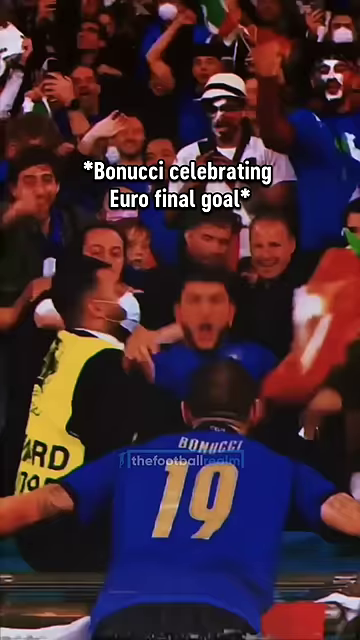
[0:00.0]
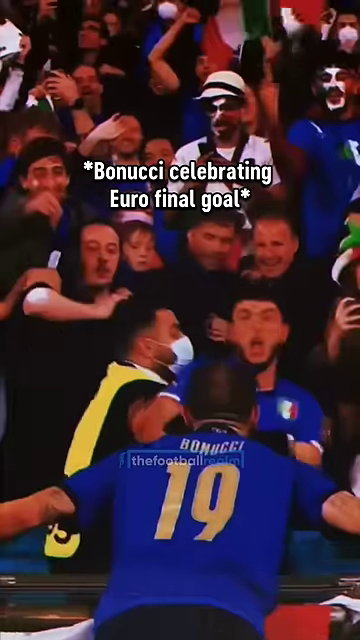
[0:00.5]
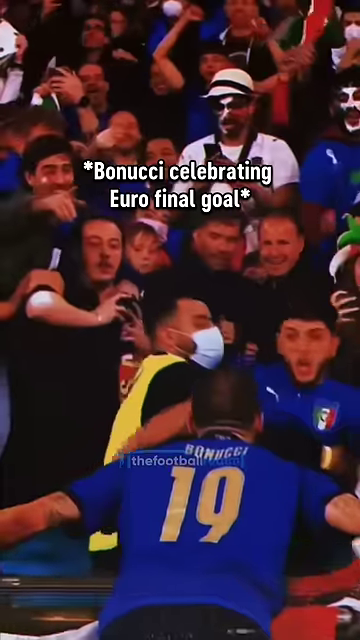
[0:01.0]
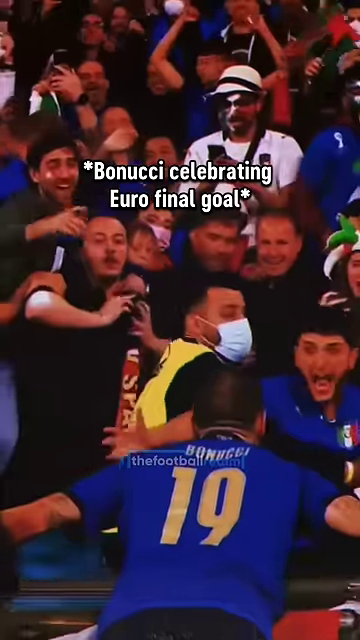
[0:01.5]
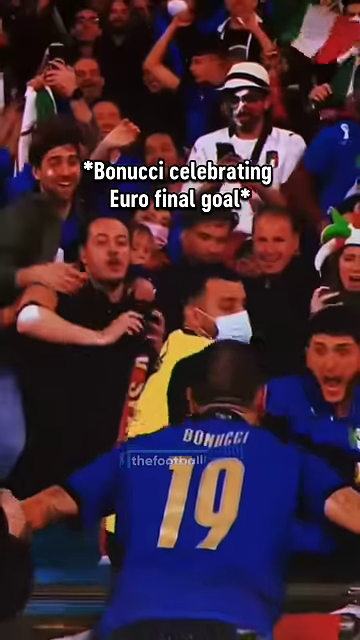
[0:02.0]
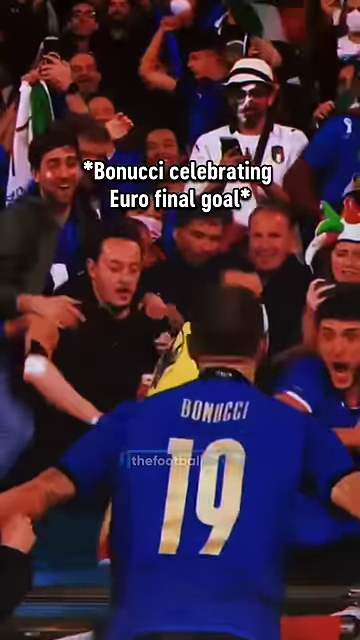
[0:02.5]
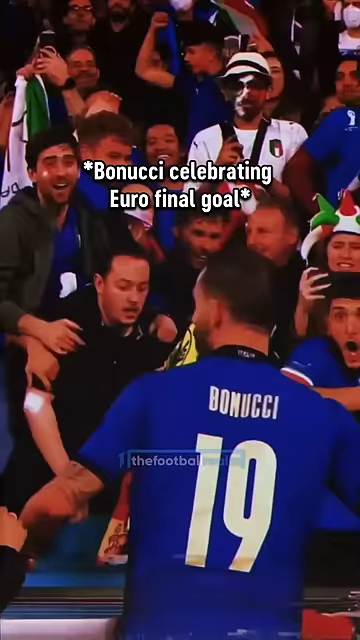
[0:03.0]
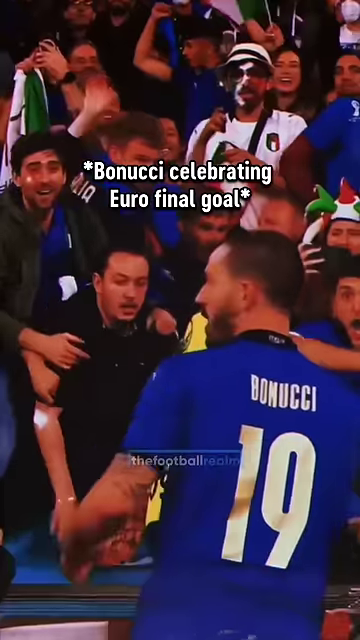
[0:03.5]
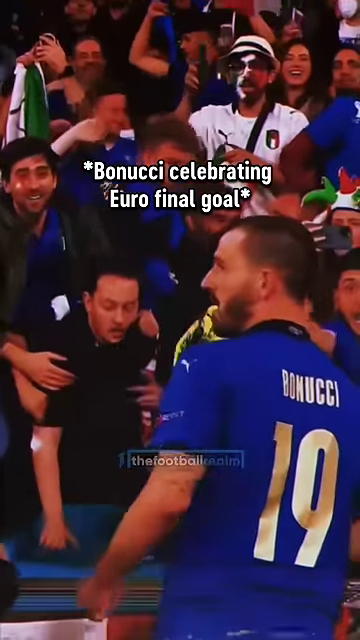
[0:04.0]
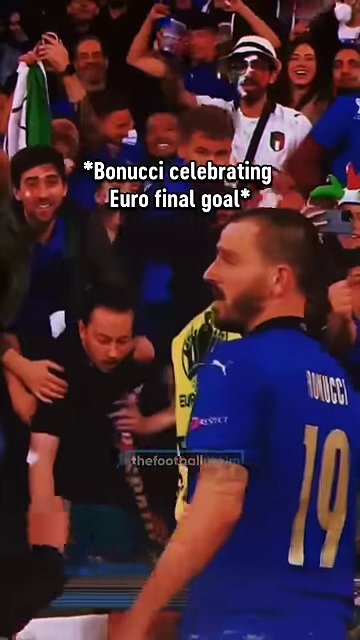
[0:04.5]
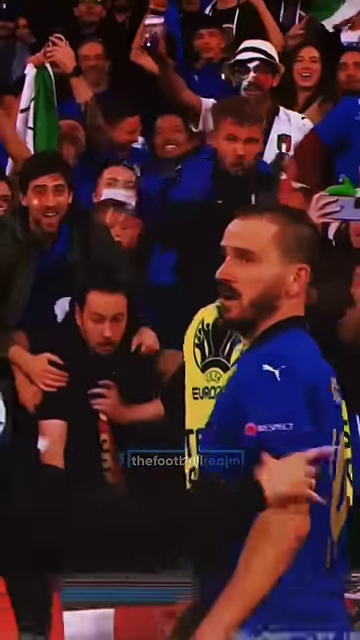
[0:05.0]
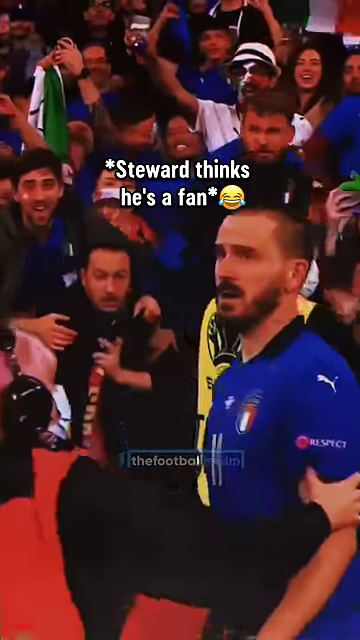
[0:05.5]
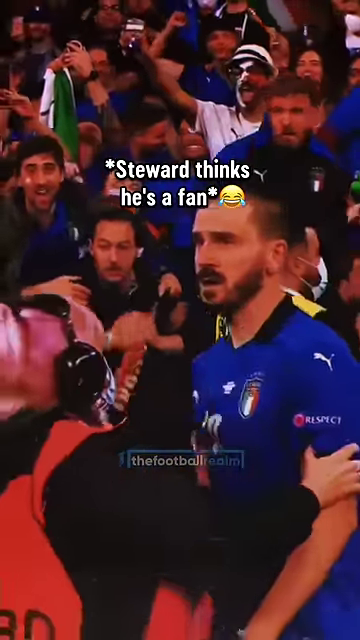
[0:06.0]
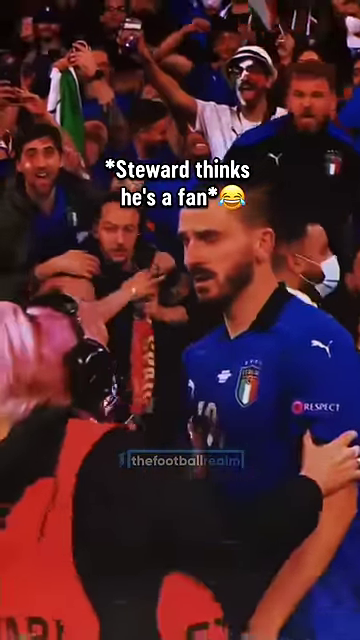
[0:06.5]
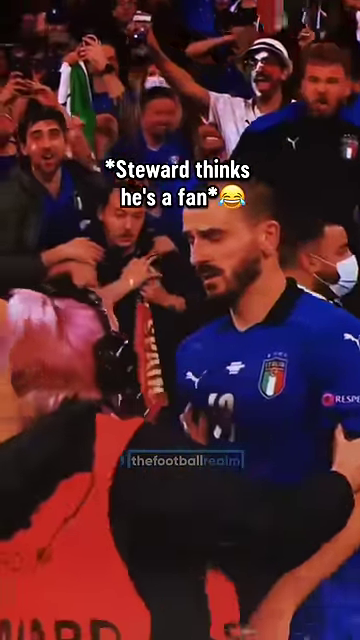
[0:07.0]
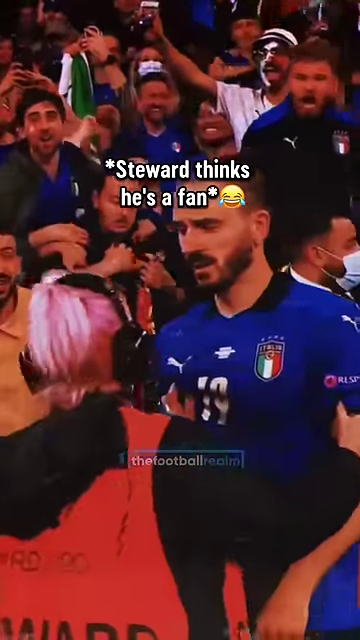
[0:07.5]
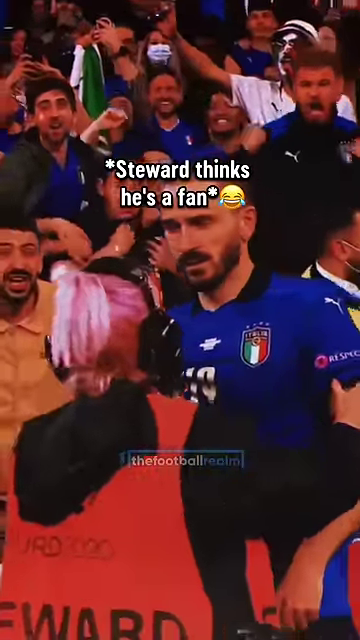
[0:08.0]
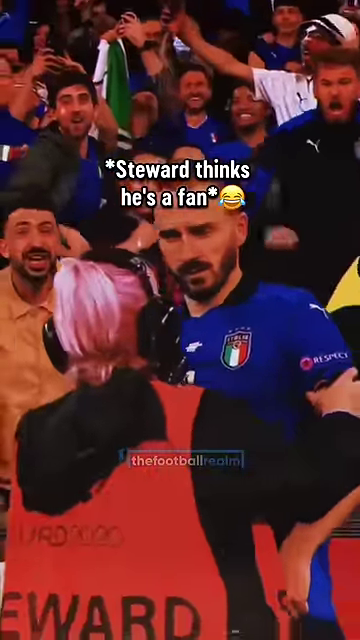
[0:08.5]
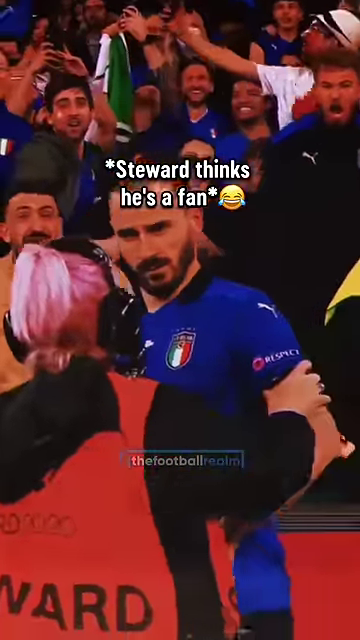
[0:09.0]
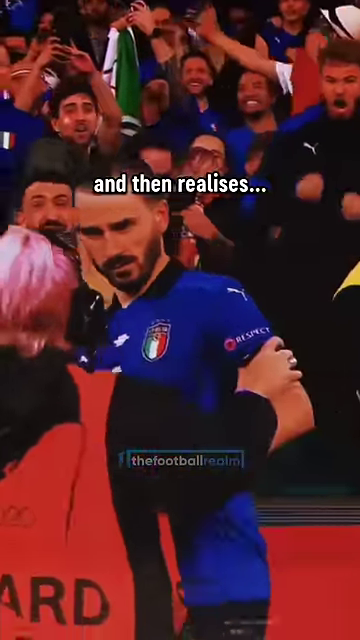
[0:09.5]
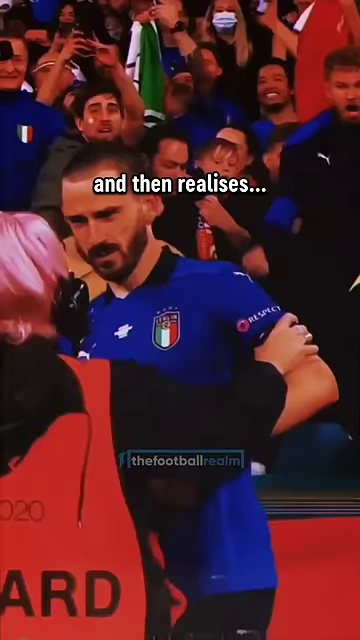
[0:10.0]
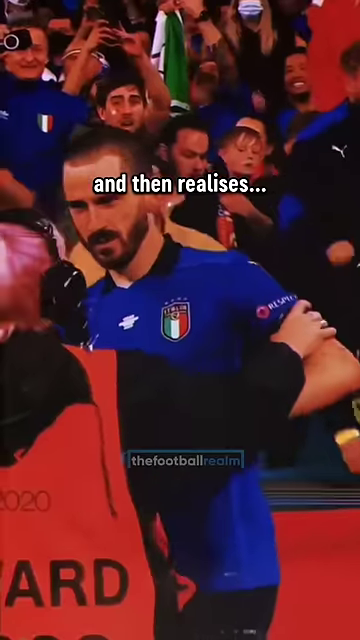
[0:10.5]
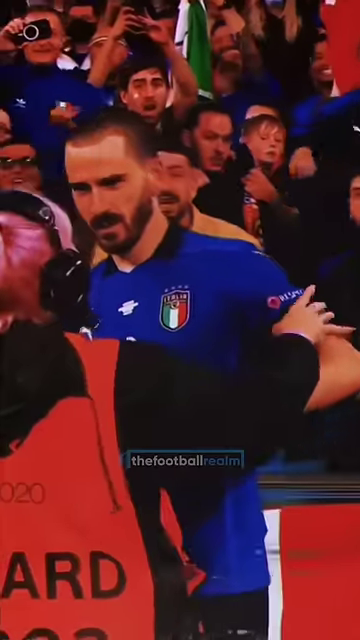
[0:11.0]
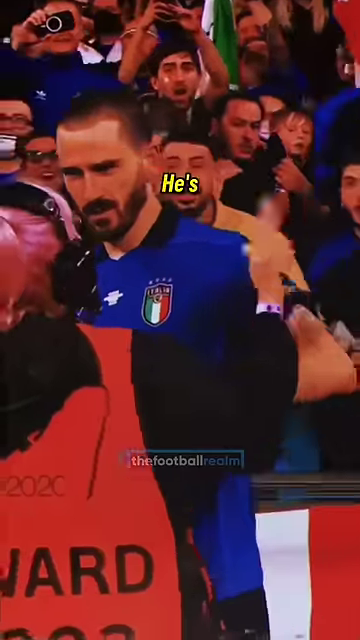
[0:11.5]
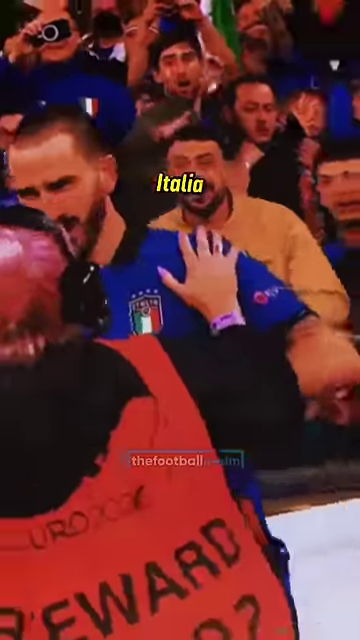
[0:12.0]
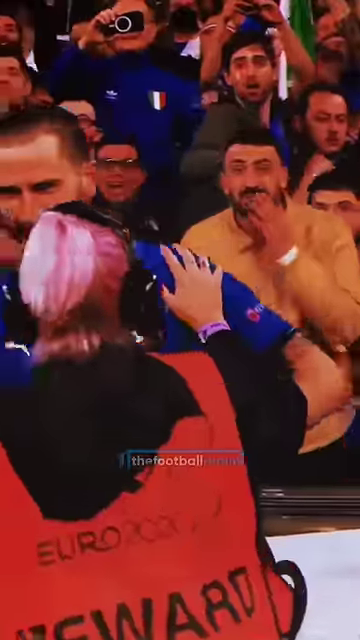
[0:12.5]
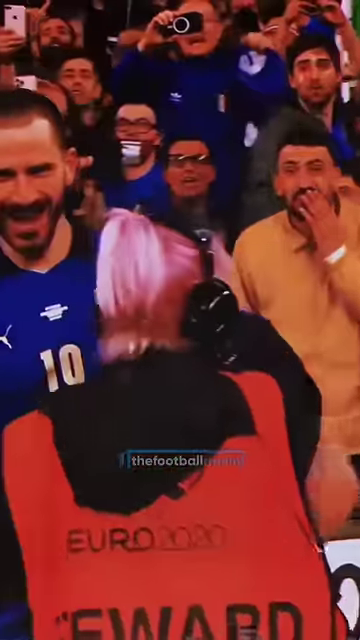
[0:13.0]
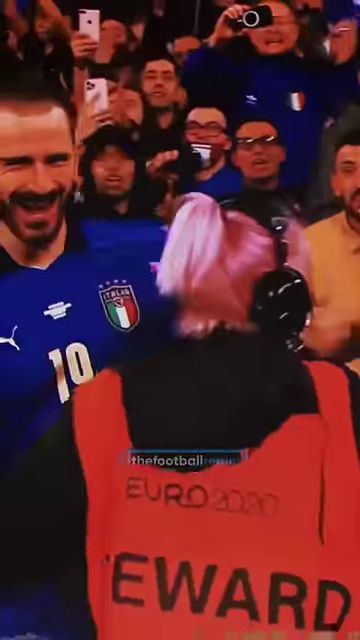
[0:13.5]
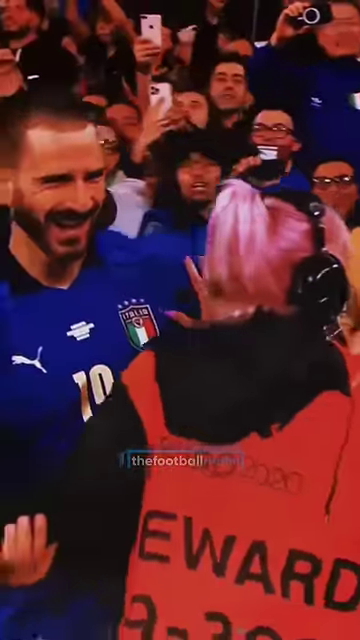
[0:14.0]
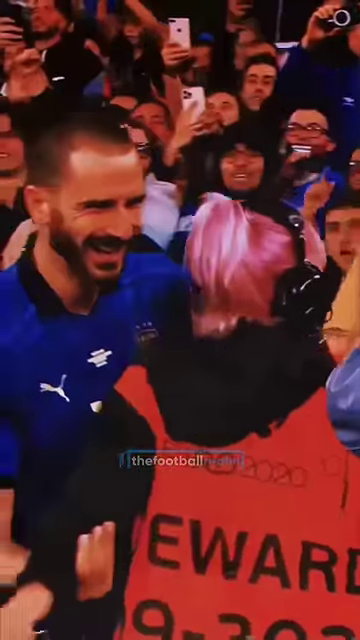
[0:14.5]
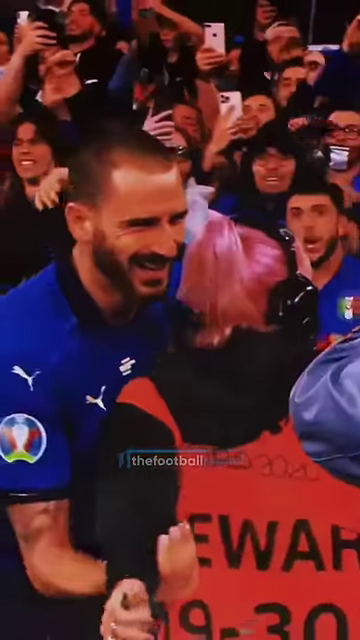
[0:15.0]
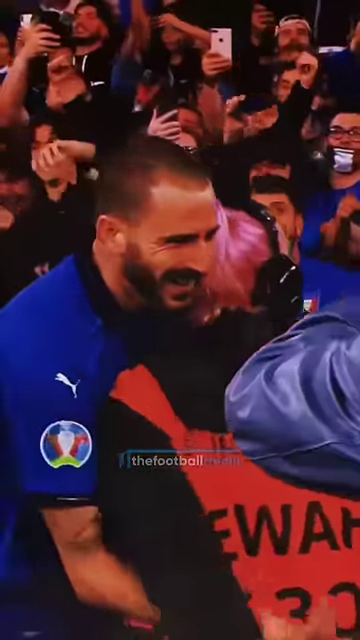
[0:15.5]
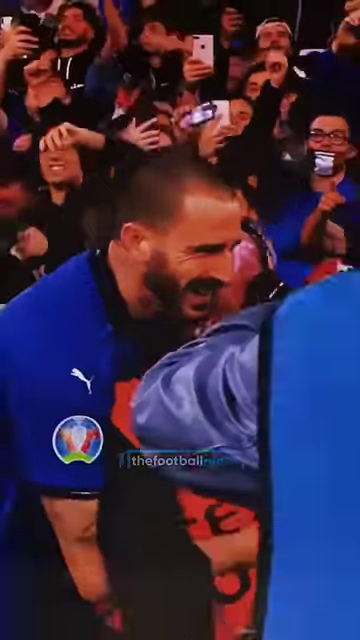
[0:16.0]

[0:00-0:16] In slow motion, a soccer player in a blue jersey approaches the crowd and bows, and the crowd is ecstatic. The back of his jersey says "Bonucci" with the number 19 and a Puma logo. The referee, a woman with a pink ponytail, approaches him and he gives her a hug. The fans are extremely happy, and several of them hold up cameras or cell phones to record the moment. As the scene unfolds, words on the screen read "Bonucci celebrating Euro final goal. Steward thinks he's a fan. He's from Italia."